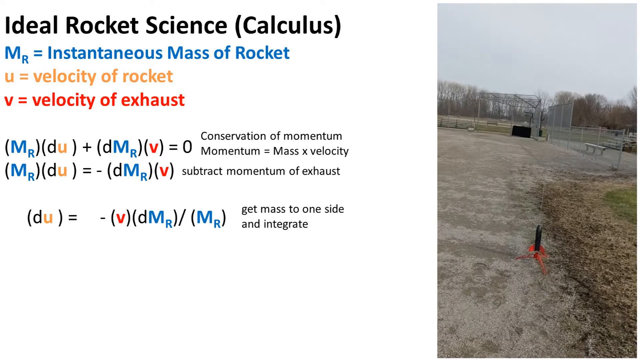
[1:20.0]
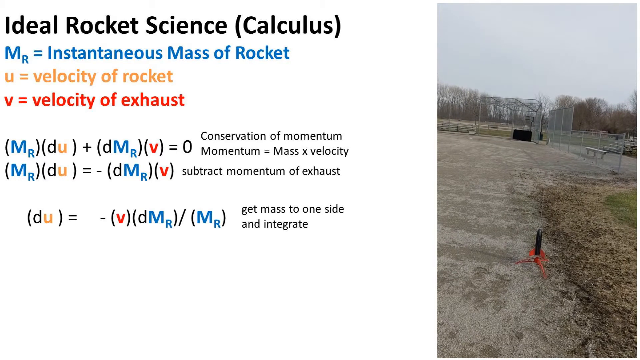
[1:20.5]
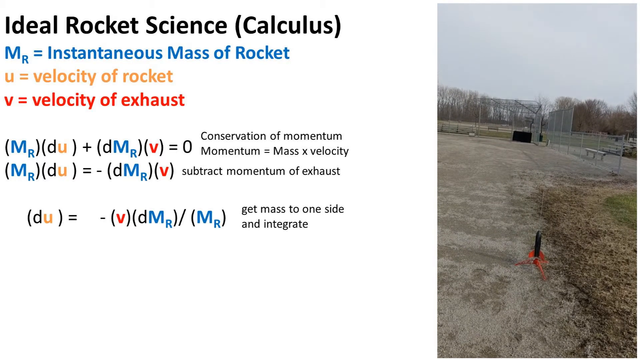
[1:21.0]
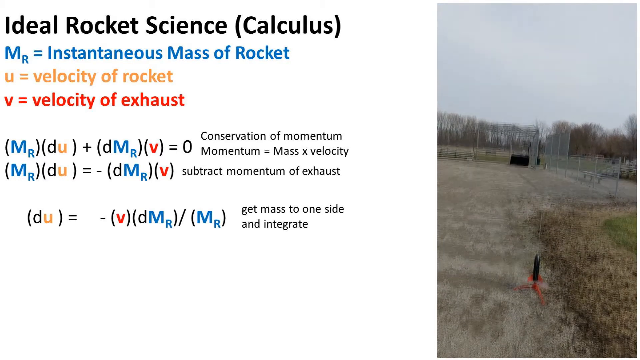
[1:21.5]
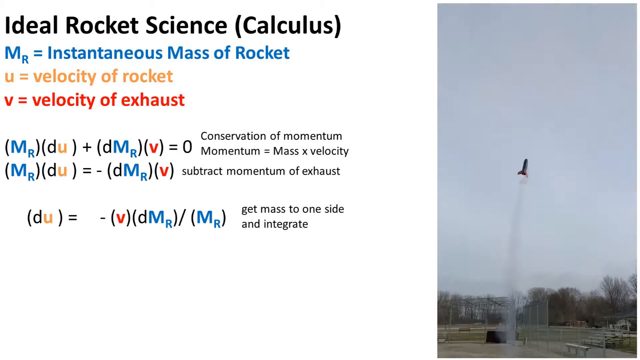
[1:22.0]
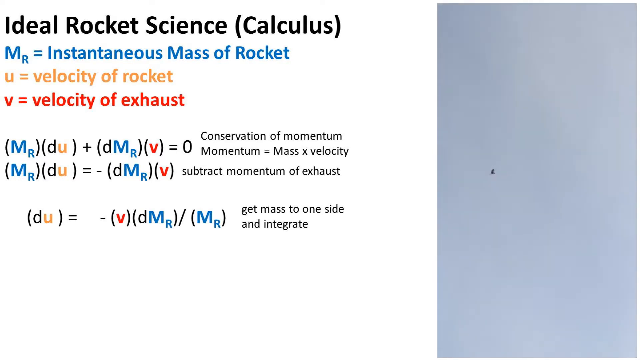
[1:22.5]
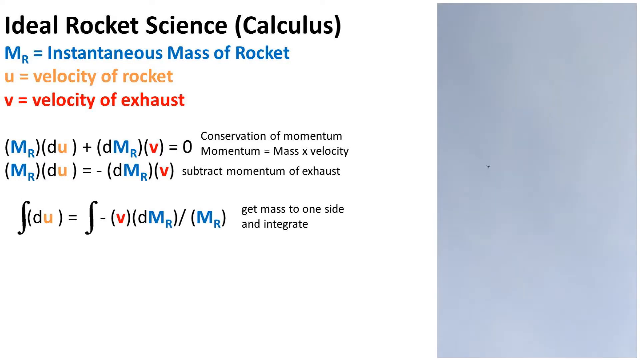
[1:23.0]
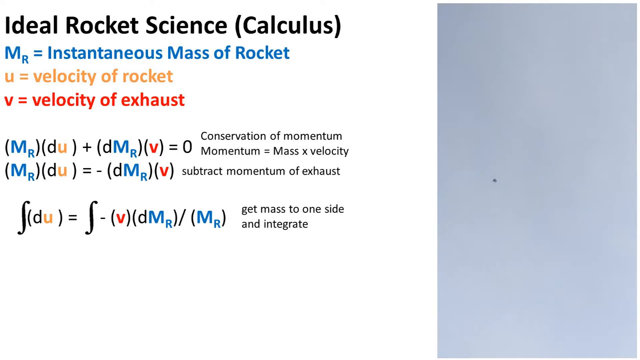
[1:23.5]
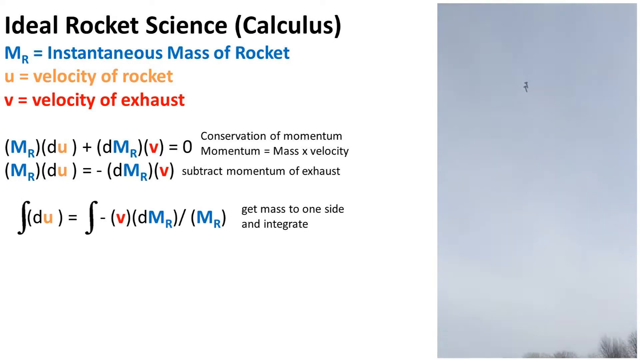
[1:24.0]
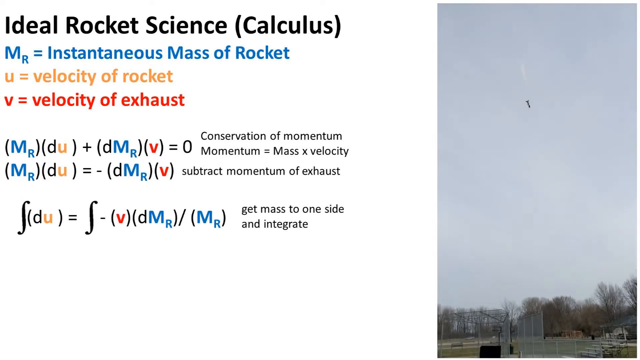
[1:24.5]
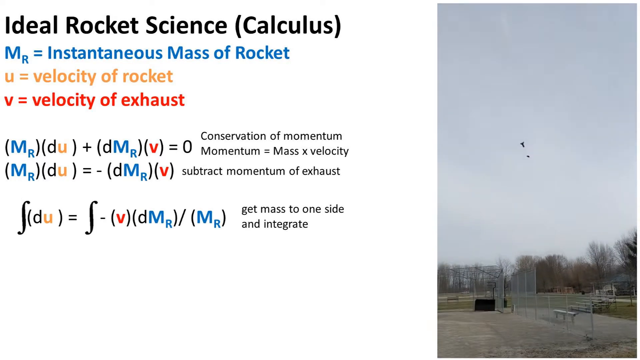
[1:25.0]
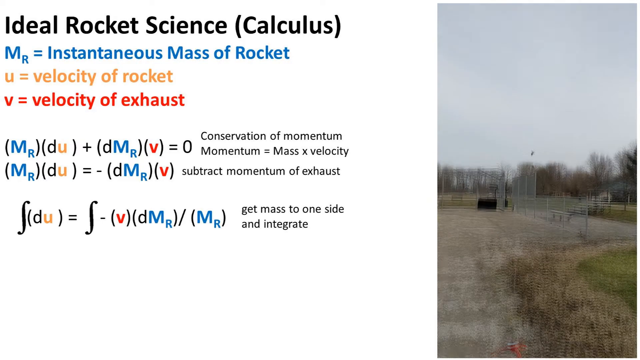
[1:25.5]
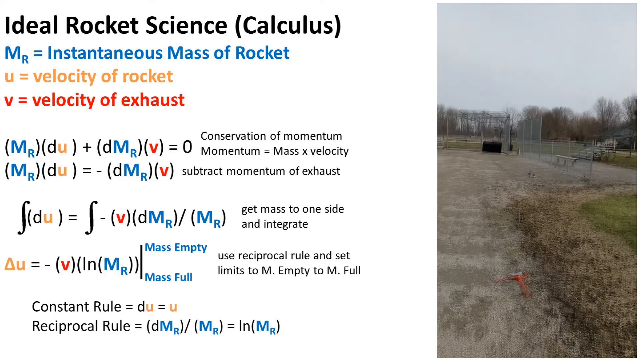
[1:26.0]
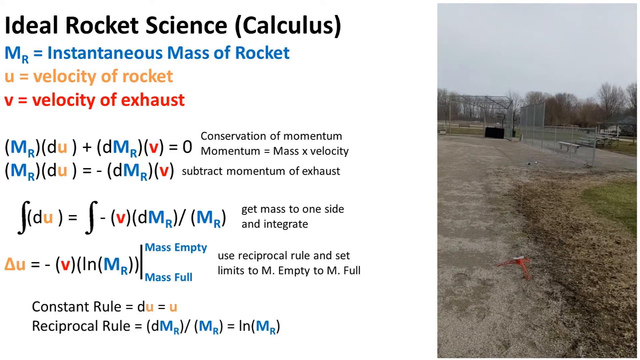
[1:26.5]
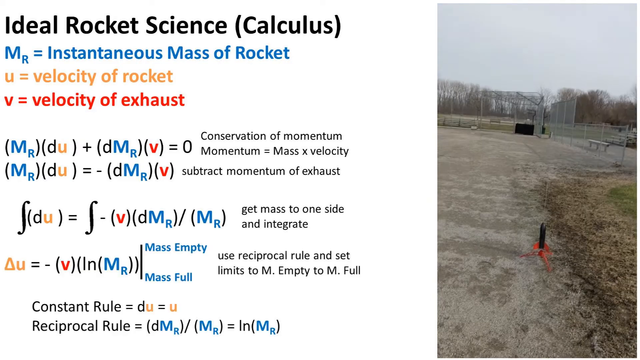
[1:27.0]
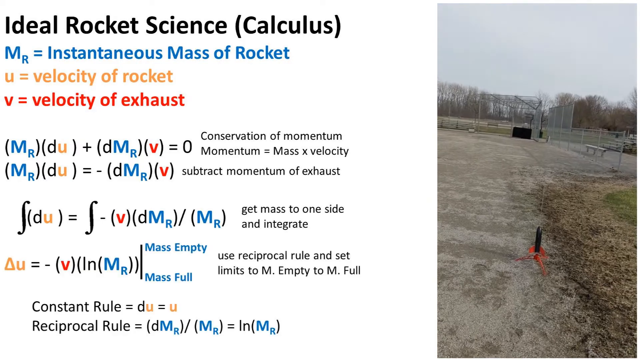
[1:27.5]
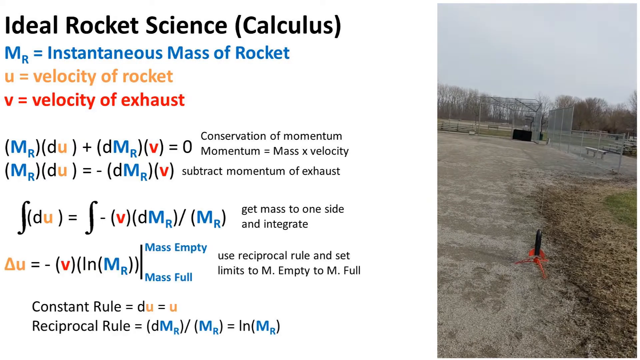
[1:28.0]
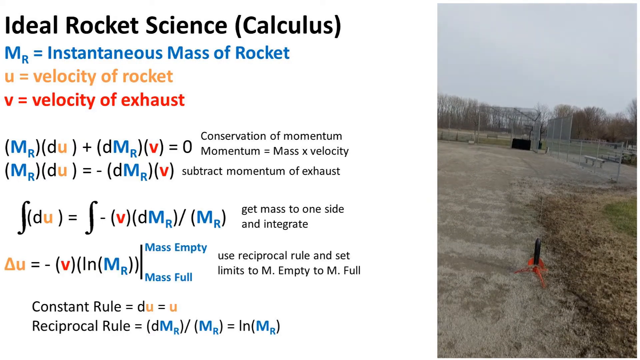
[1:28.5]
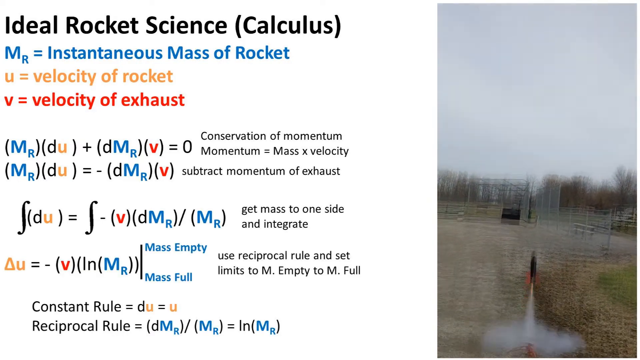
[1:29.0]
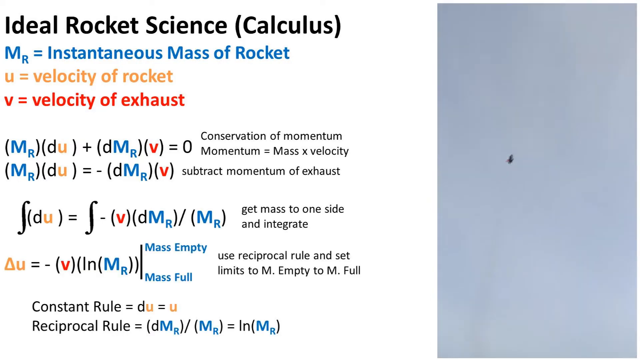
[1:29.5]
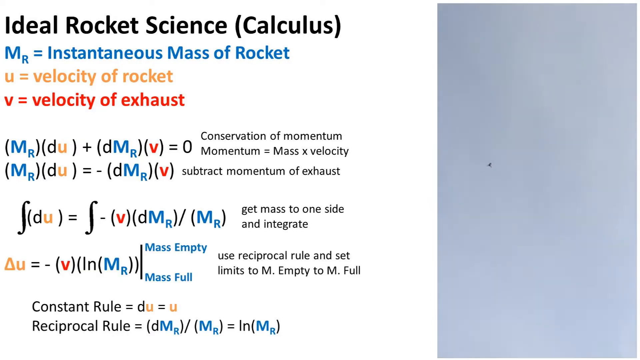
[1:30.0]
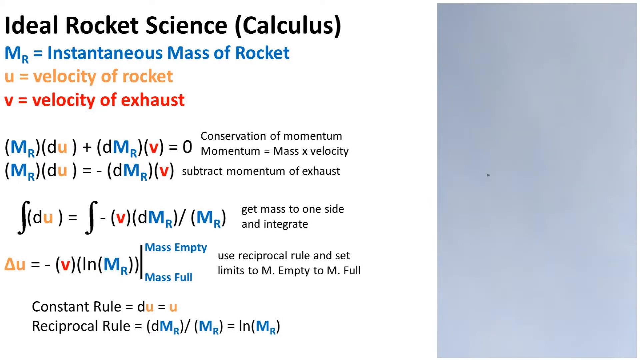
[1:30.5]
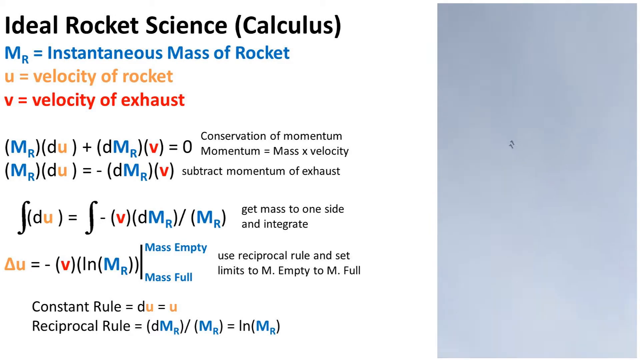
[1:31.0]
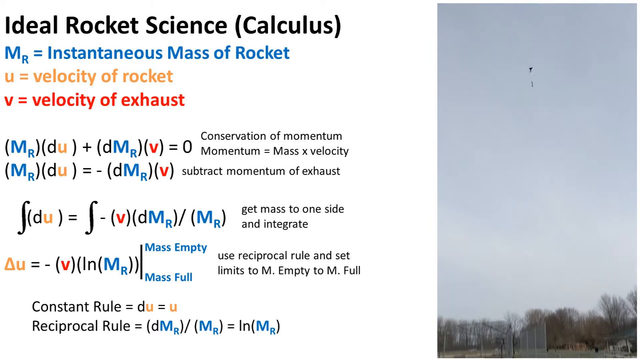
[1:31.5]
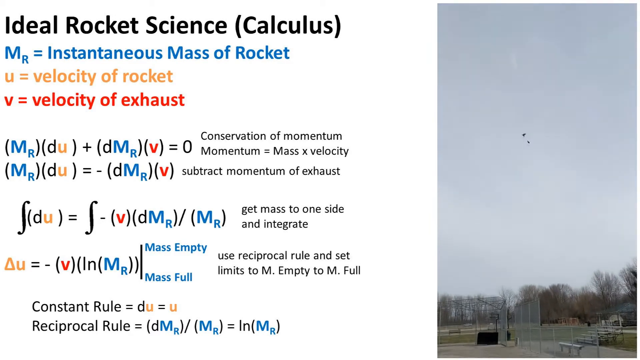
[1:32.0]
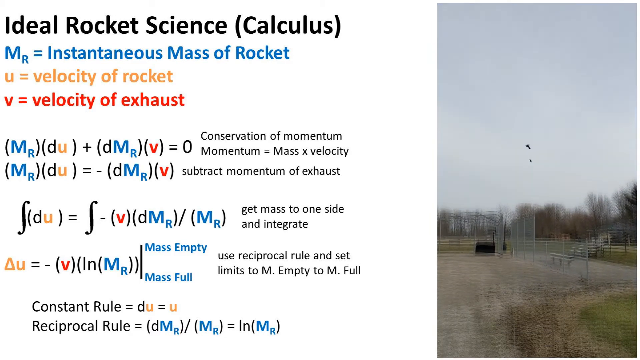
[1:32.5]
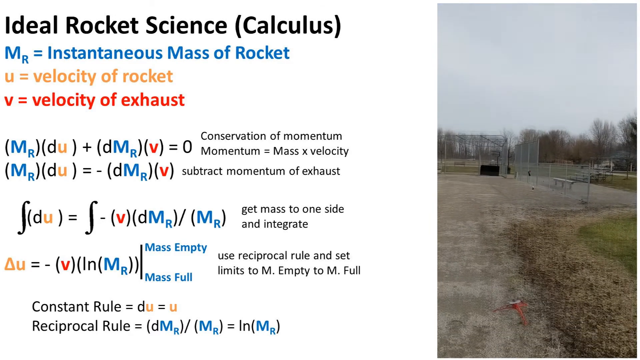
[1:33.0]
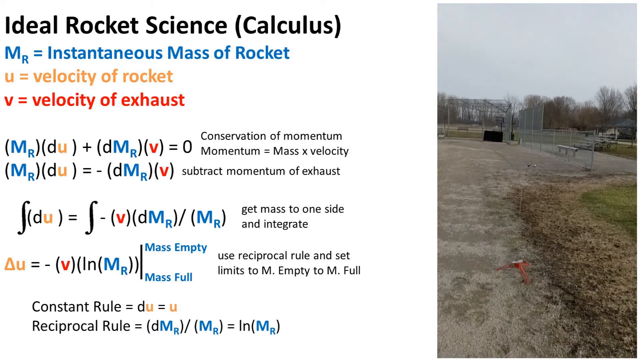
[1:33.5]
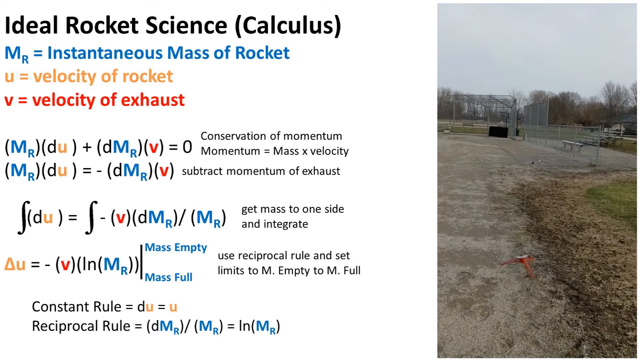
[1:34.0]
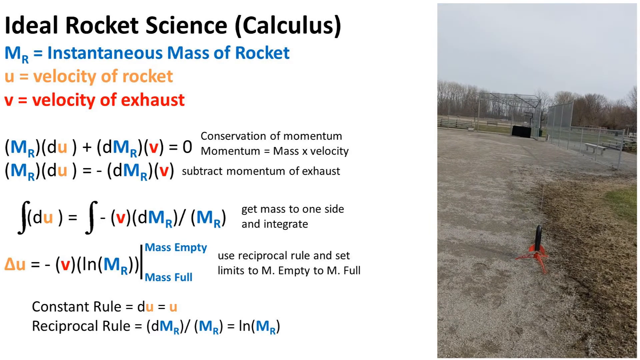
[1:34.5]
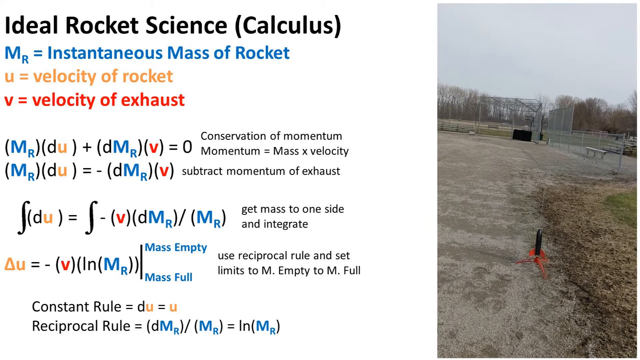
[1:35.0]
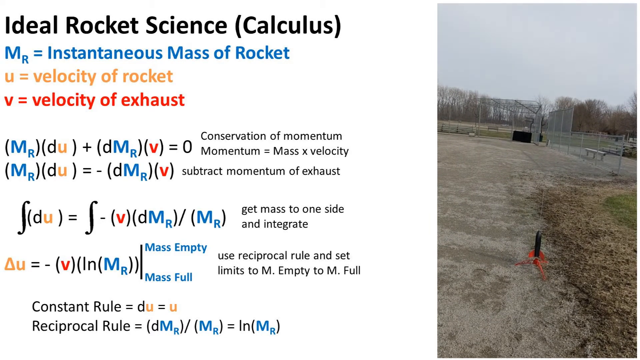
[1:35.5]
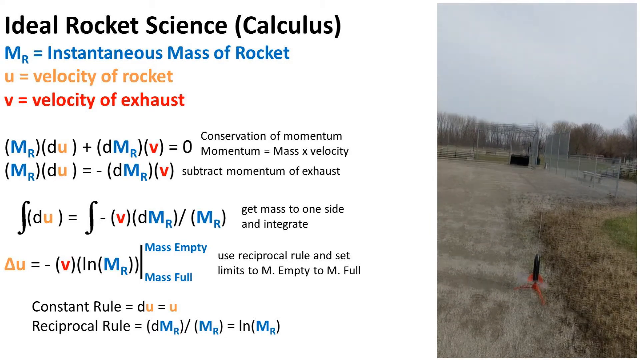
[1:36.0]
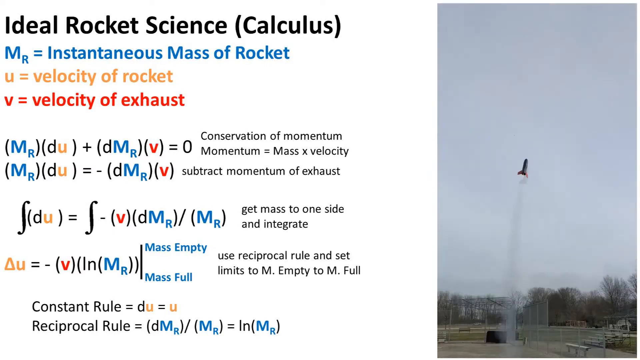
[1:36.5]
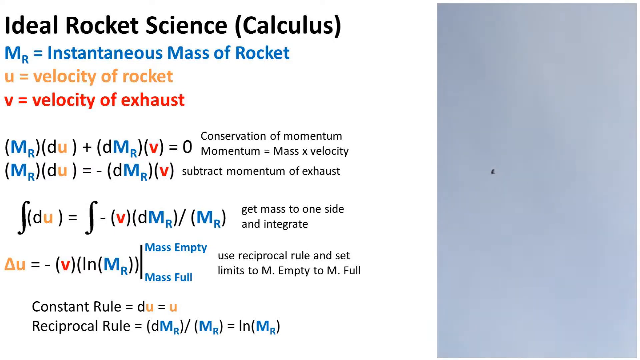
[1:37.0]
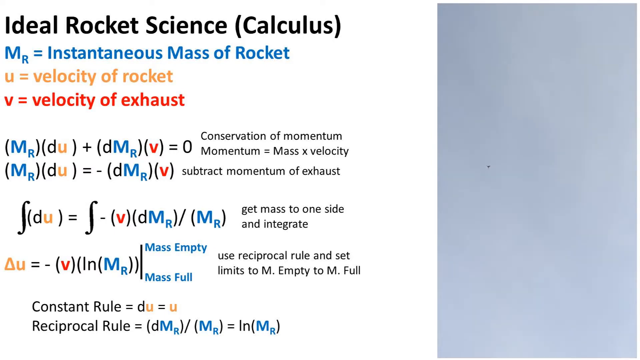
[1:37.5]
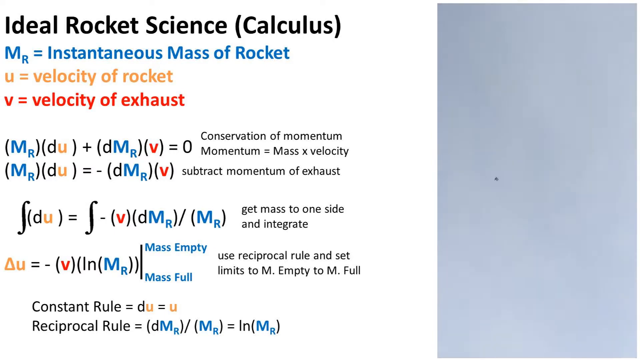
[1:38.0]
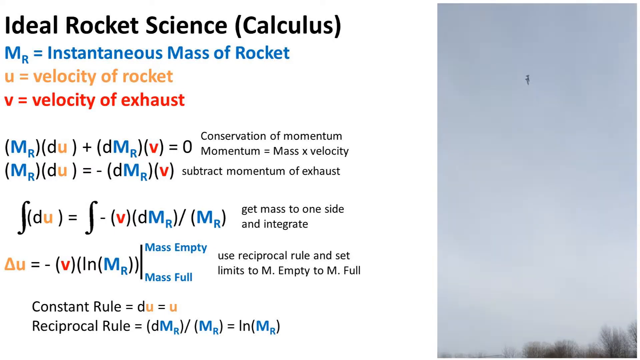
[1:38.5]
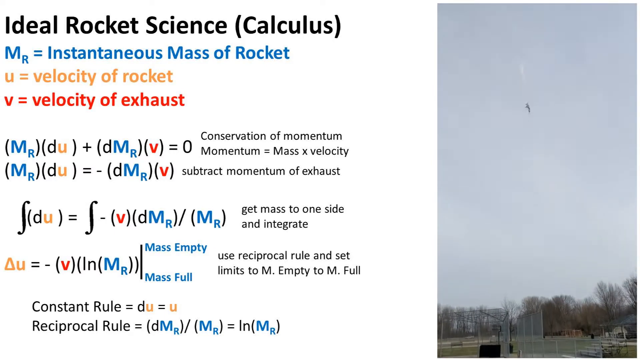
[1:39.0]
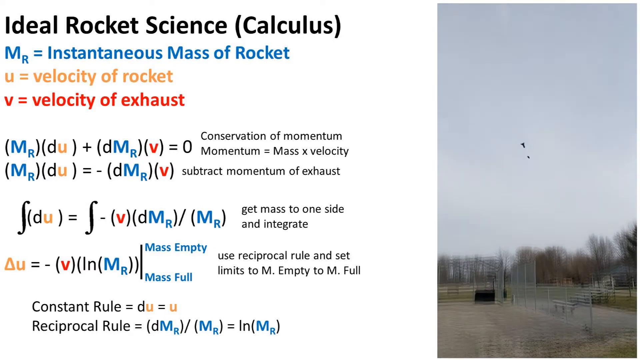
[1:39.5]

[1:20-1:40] The order of operations for the conservation of momentum equation continues. The three variables are the instantaneous mass of a rocket, the velocity of a rocket, and the velocity of exhaust. The momentum of the exhaust is subtracted and the velocity of the rocket is isolated from the rest of the equation. After integrating, the viewer is instructed to apply the reciprocal rule and set limits on the variable m, the mass, from empty to full. At the bottom of the screen are the constant rule and the reciprocal rule: the constant rule shows du equals u, and the reciprocal rule shows dm in parentheses over m in parentheses. Every portion of the equation is color-coded according to the variables at the top left. The background behind the equation and text is solid white, and a looping video of a rocket flying in the air plays on the right side of the screen.